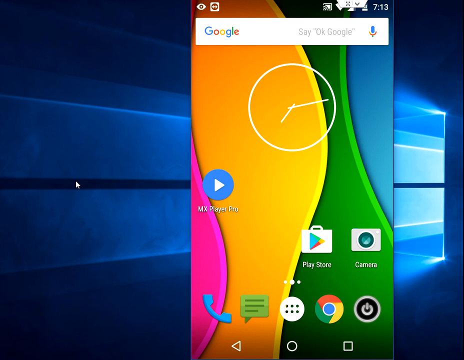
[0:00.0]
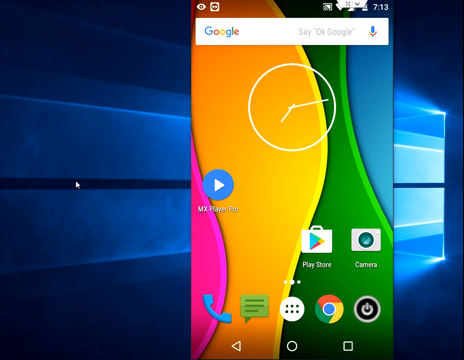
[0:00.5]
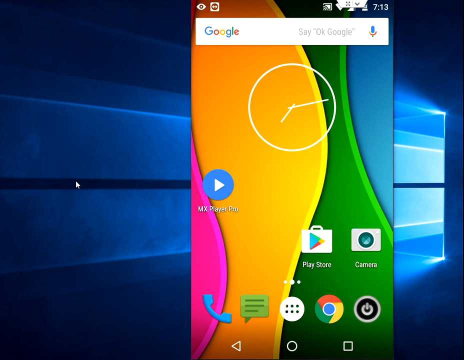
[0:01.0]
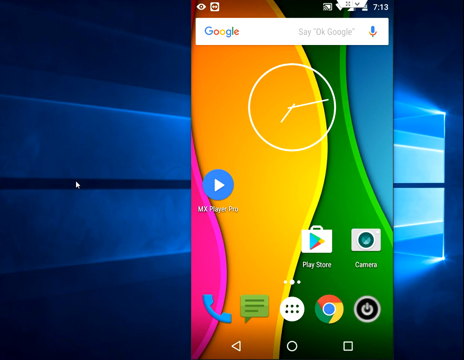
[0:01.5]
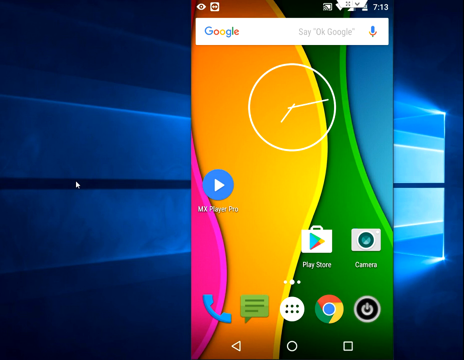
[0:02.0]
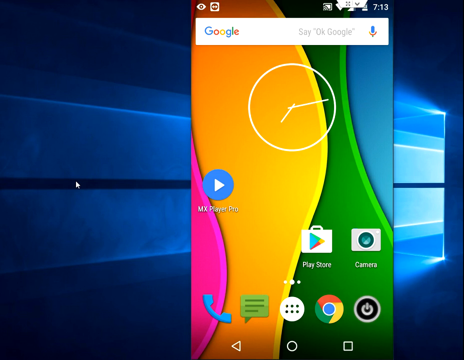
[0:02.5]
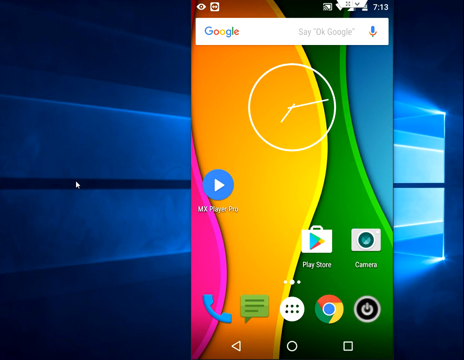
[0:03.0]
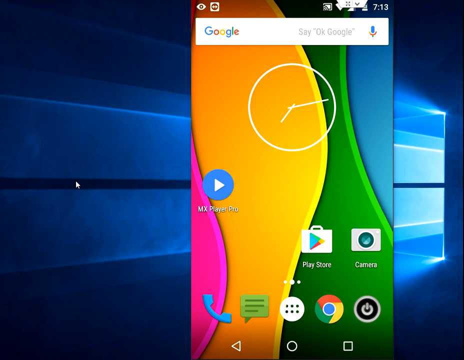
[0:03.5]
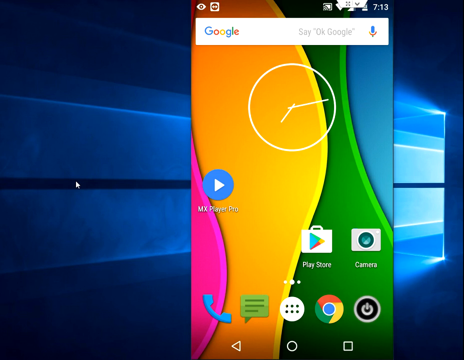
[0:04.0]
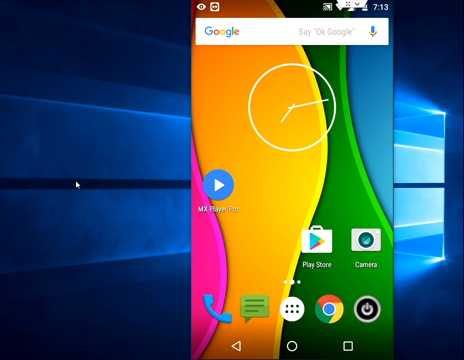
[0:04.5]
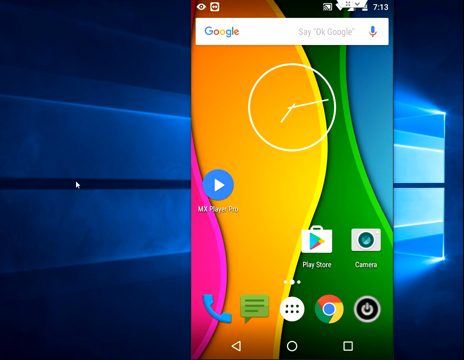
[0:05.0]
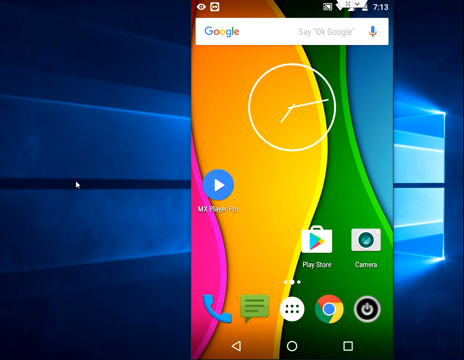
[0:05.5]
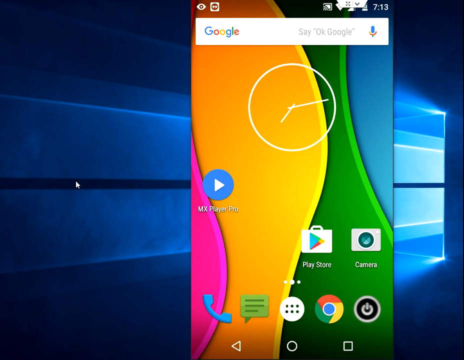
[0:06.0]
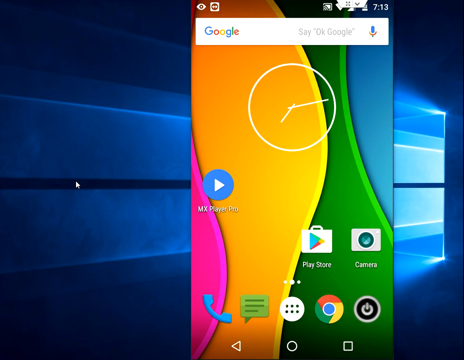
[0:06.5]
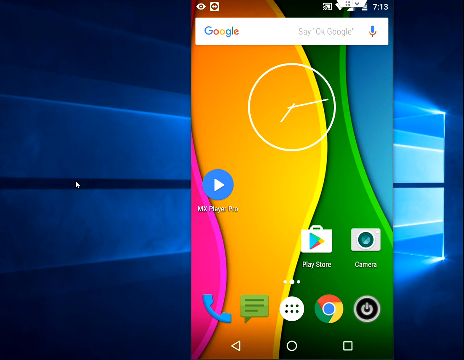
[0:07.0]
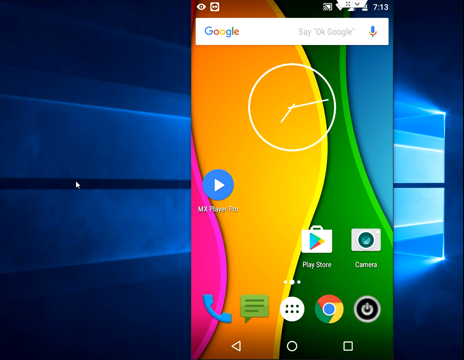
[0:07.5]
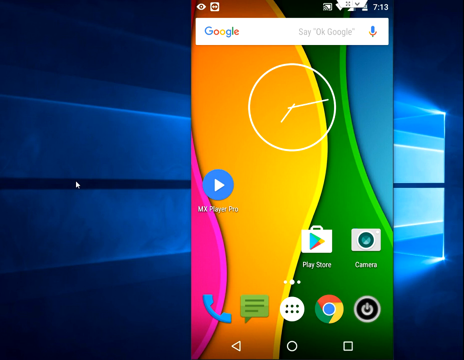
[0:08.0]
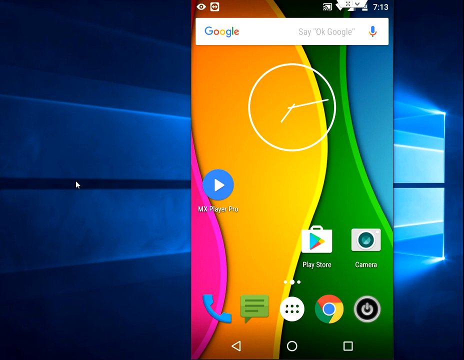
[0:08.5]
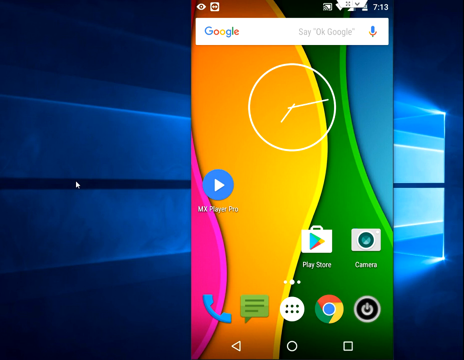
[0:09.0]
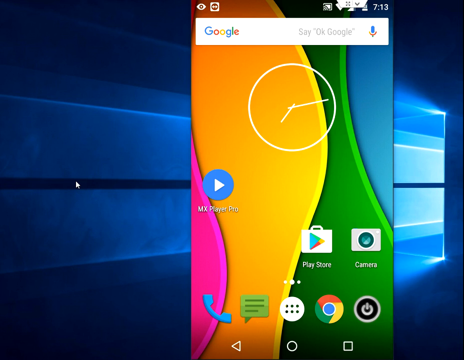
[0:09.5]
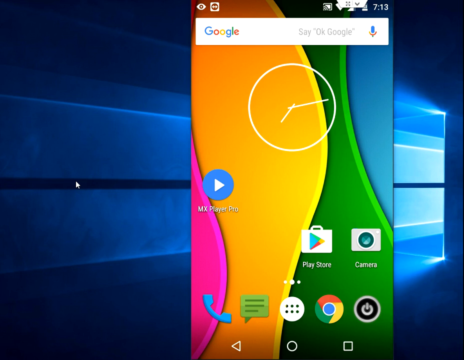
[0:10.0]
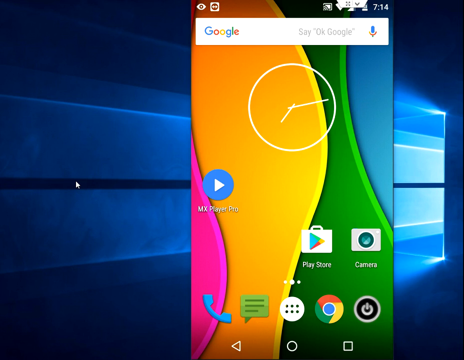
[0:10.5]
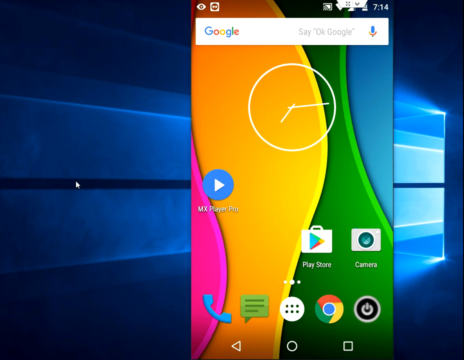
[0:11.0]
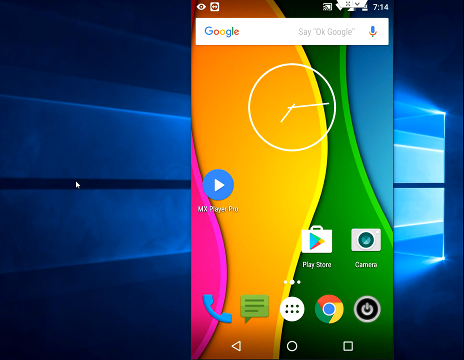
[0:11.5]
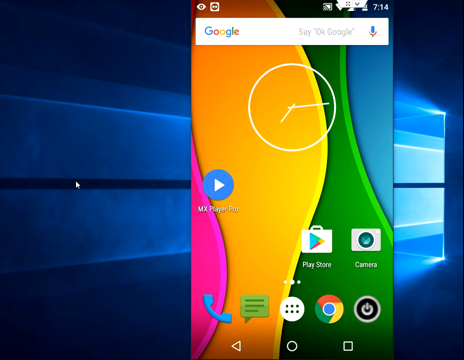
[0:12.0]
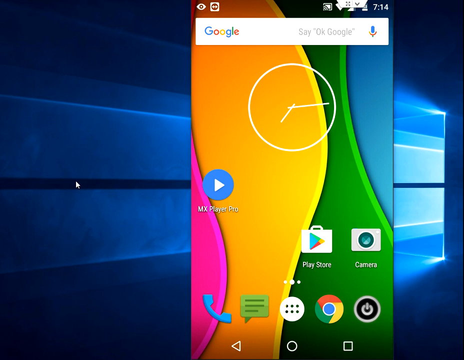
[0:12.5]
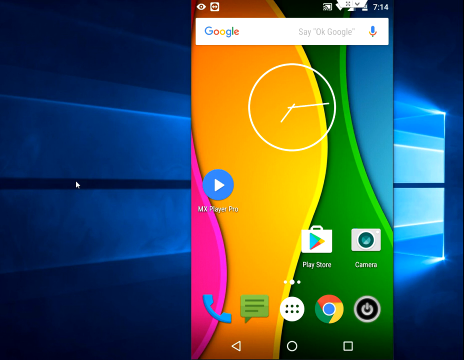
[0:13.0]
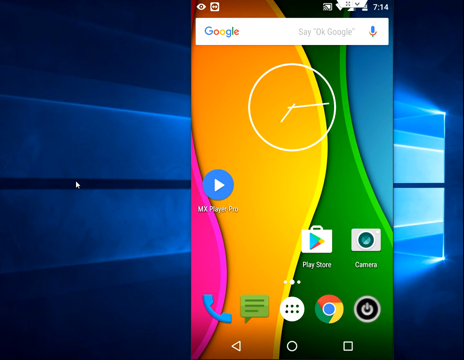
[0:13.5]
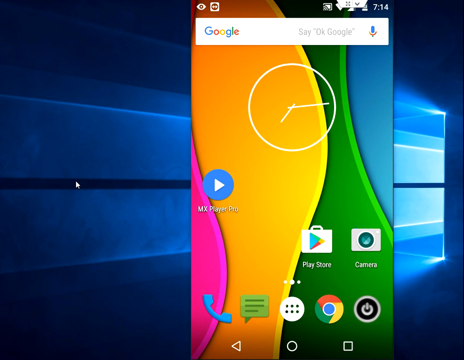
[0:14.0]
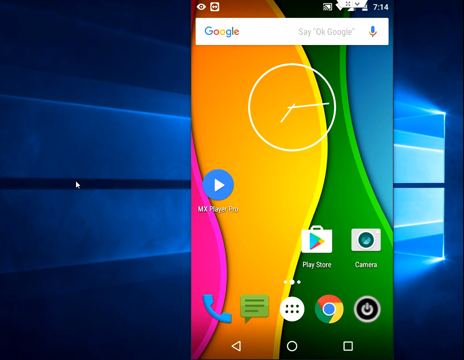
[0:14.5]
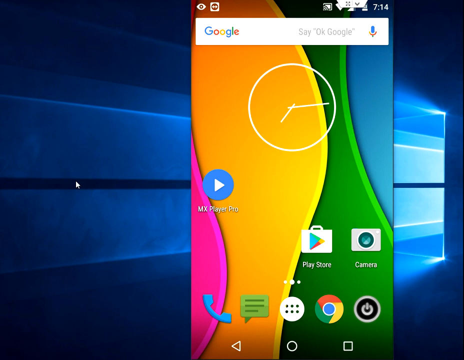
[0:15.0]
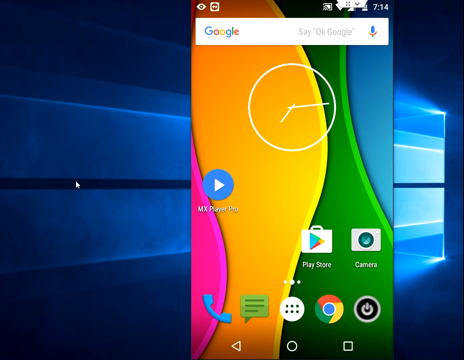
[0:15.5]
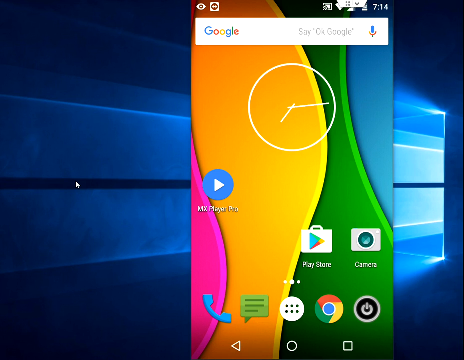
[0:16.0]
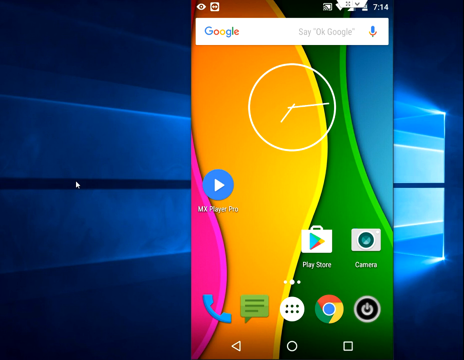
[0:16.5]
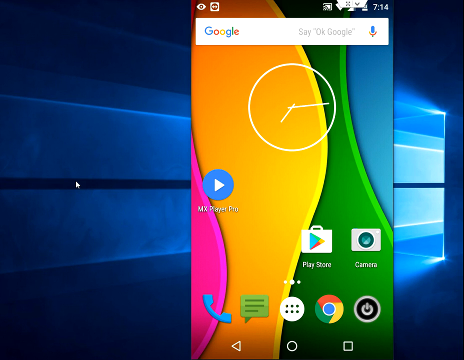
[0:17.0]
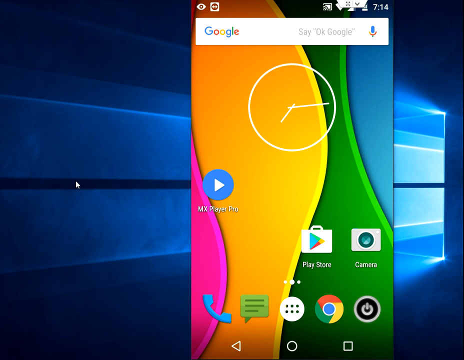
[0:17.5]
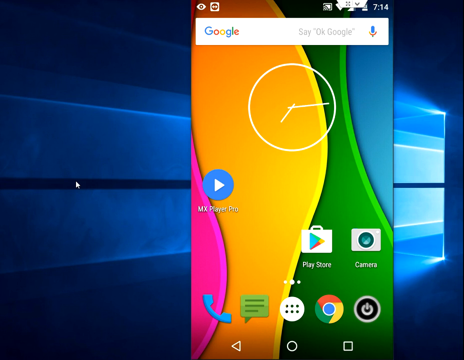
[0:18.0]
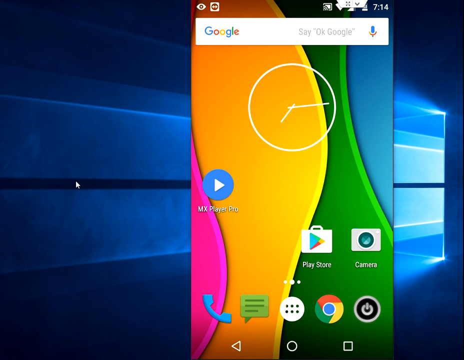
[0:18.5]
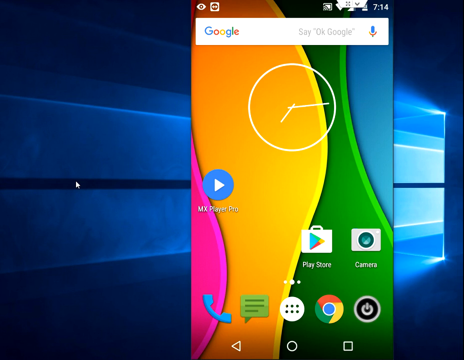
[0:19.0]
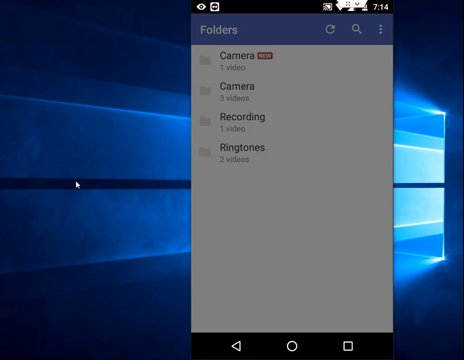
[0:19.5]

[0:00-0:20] The video begins with what looks to be a phone screen, possibly a virtual phone screen, since there is a blue computer graphic behind it. The phone's screen has a multicolored swirled design that looks like pink, orange, green, and blue, and it holds several app icons: a Google search bar, the MX player app, Play Store, camera, Chrome, messenger, and phone call icons. The view stays on this wallpaper for a long time before it finally switches to a blue and white screen with "folders" at the top, and below it "camera," "camera" again, "recording," and "ringtones."